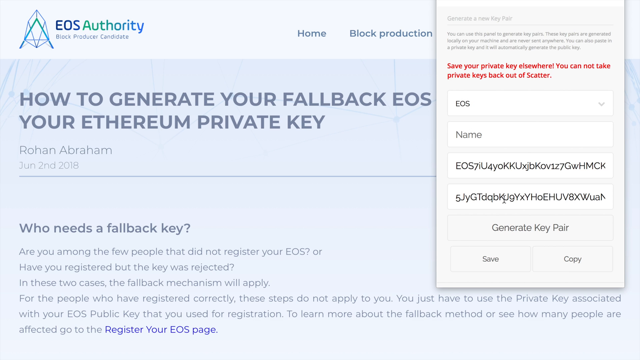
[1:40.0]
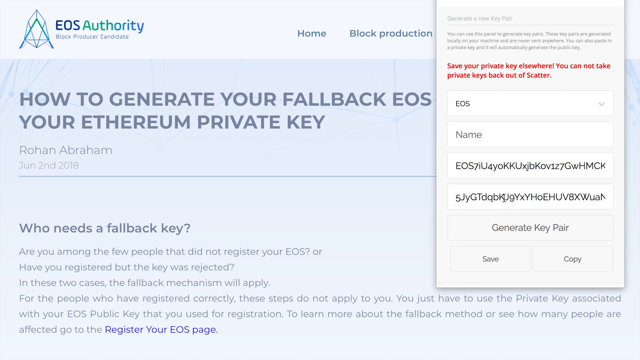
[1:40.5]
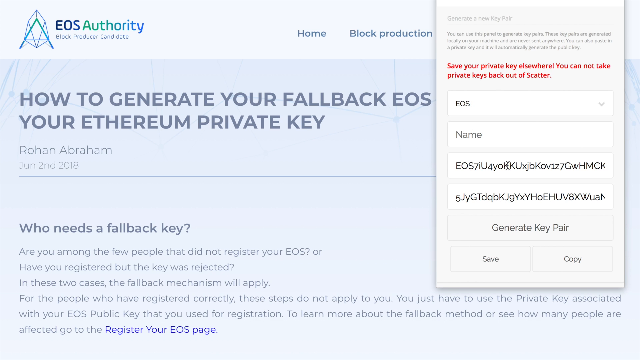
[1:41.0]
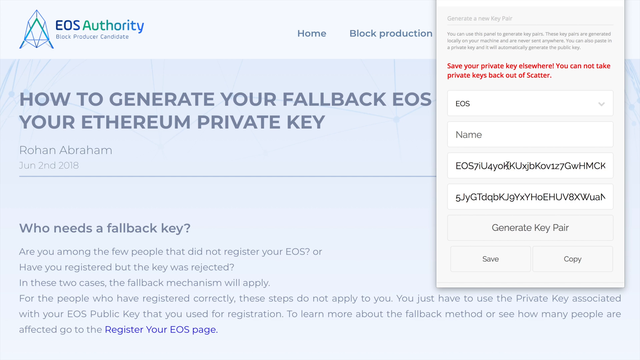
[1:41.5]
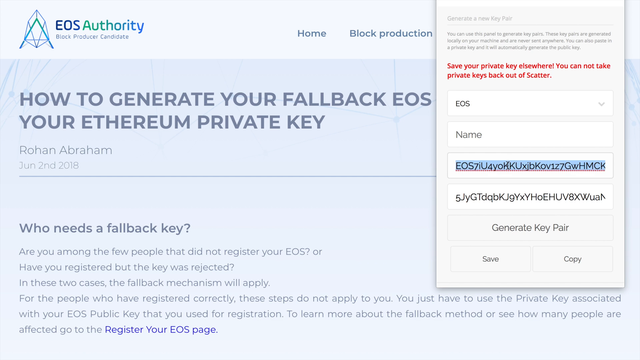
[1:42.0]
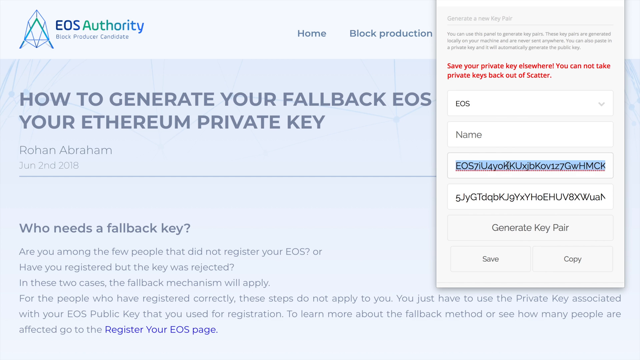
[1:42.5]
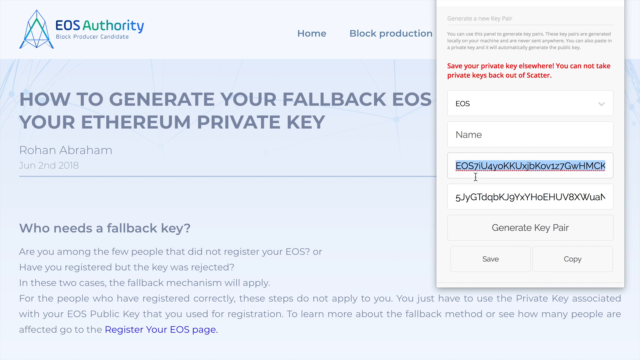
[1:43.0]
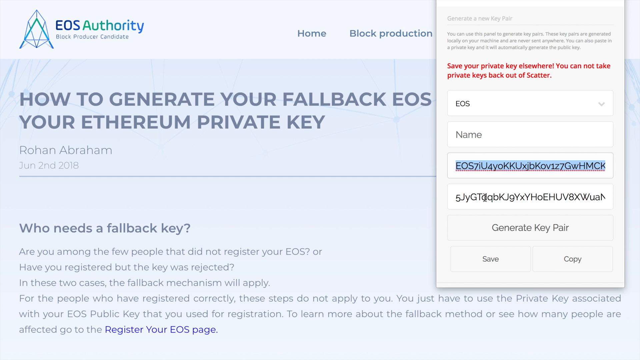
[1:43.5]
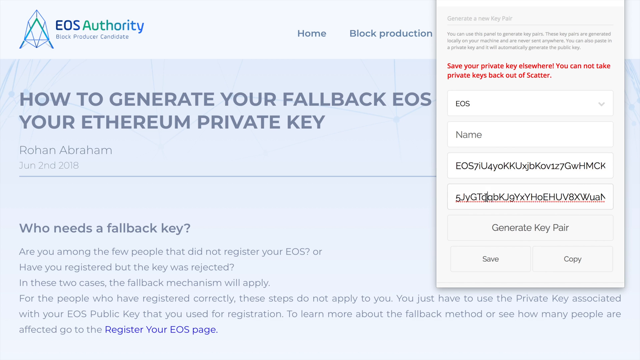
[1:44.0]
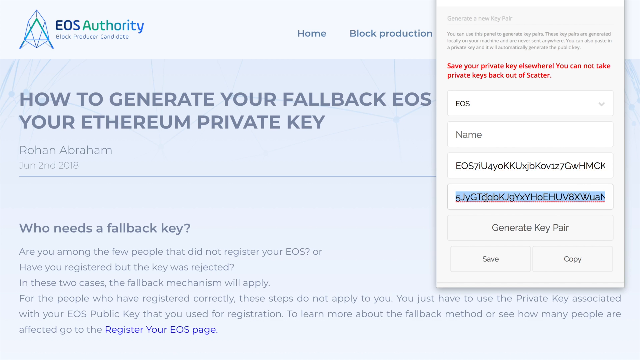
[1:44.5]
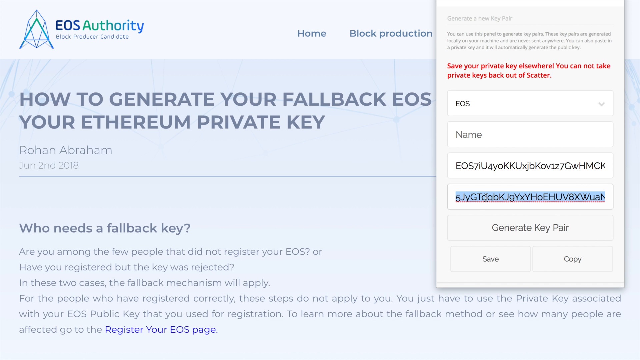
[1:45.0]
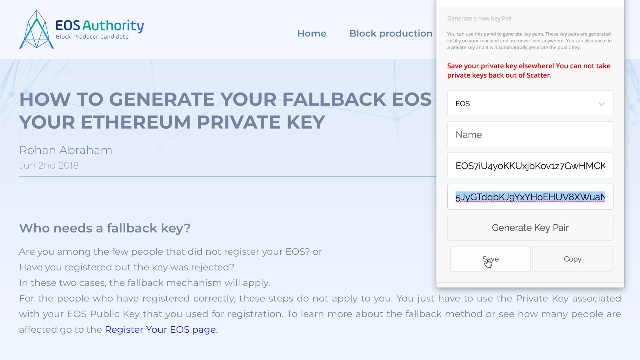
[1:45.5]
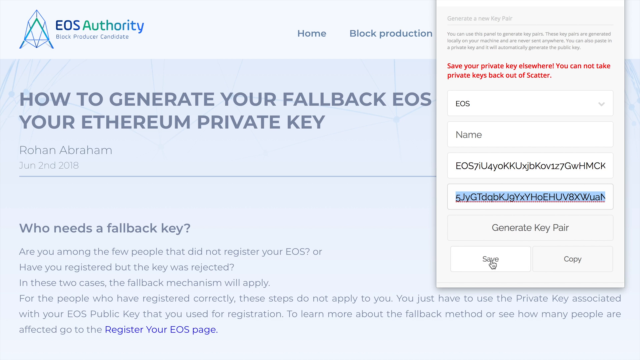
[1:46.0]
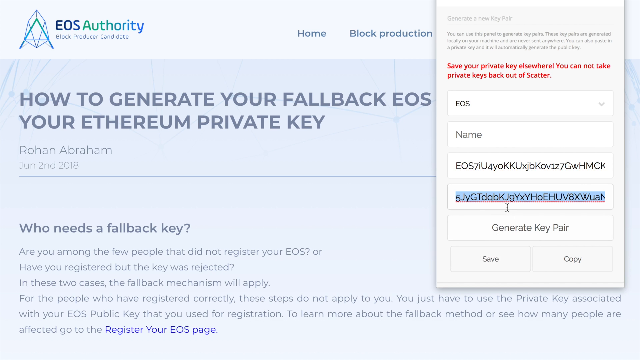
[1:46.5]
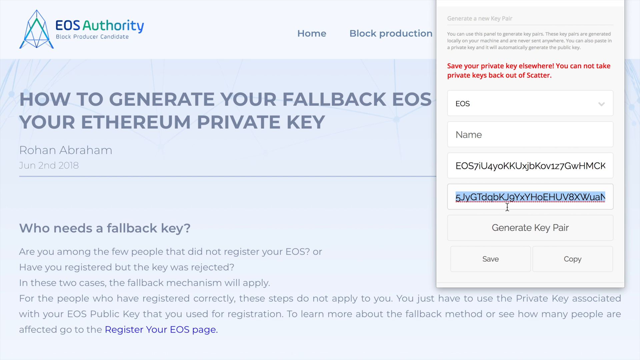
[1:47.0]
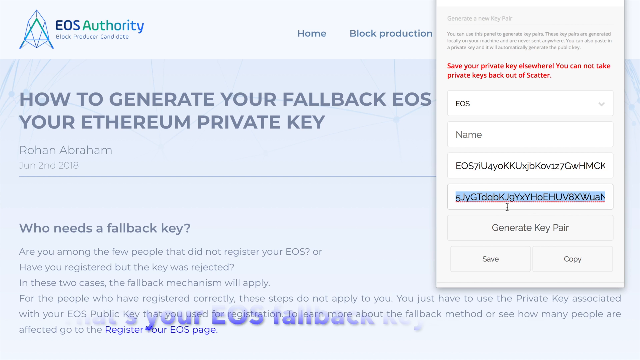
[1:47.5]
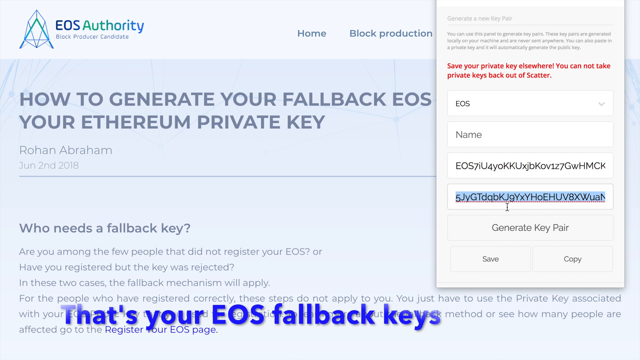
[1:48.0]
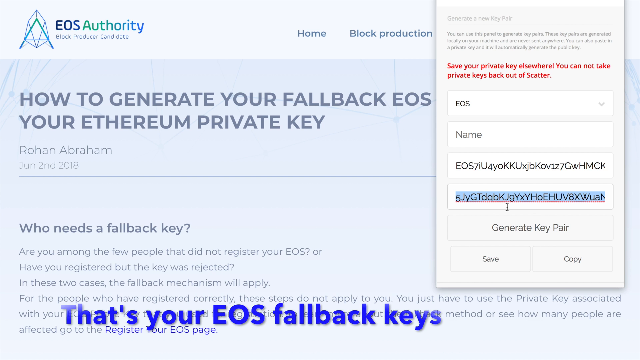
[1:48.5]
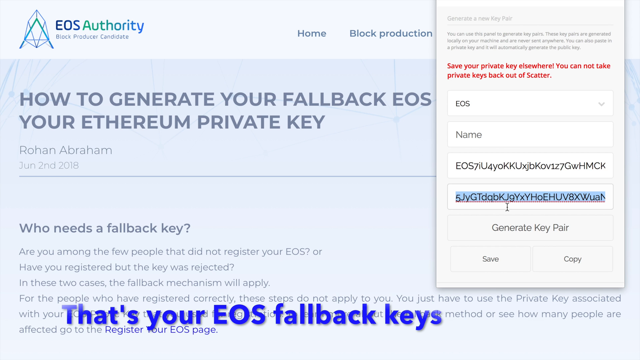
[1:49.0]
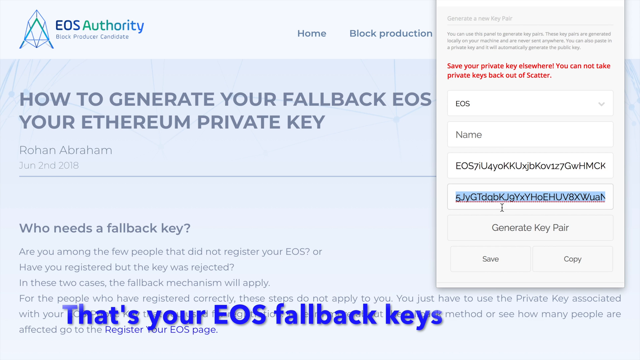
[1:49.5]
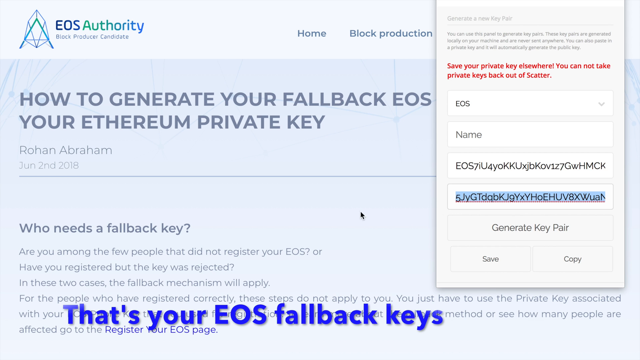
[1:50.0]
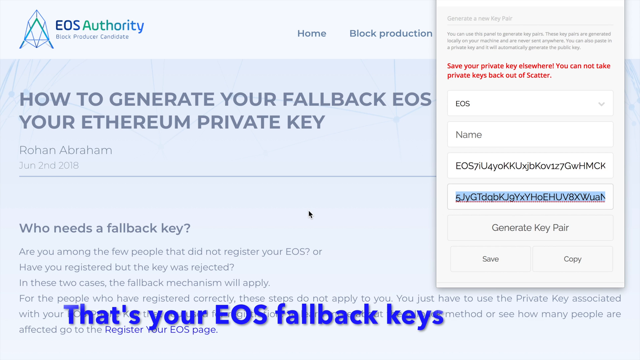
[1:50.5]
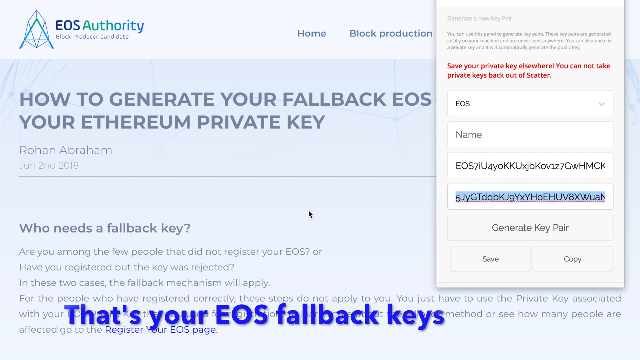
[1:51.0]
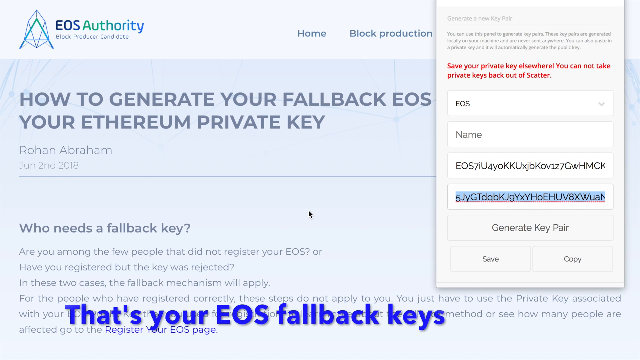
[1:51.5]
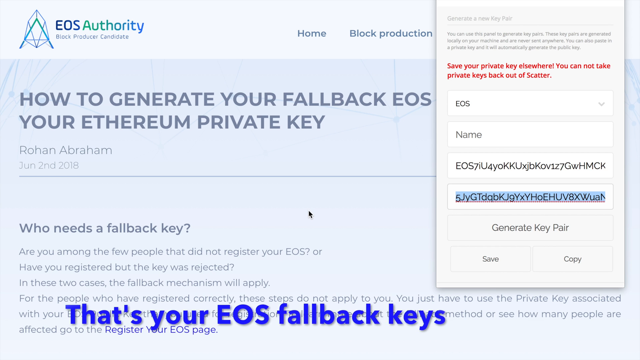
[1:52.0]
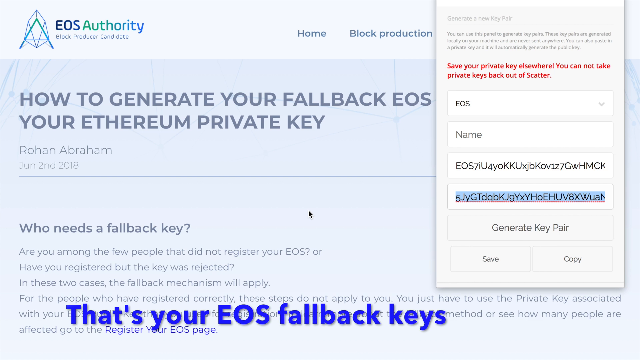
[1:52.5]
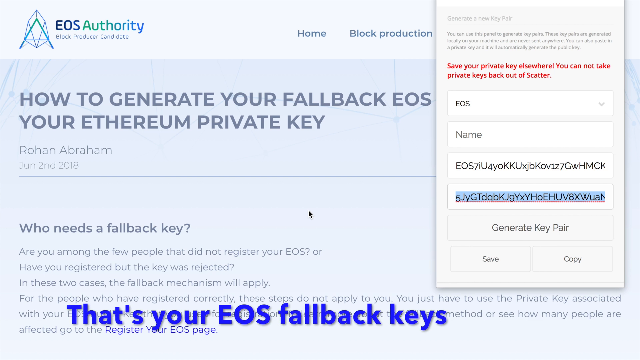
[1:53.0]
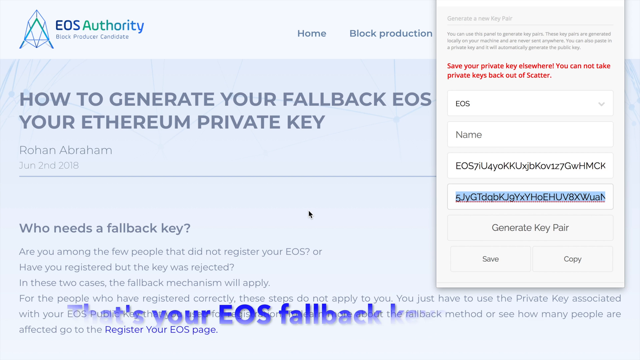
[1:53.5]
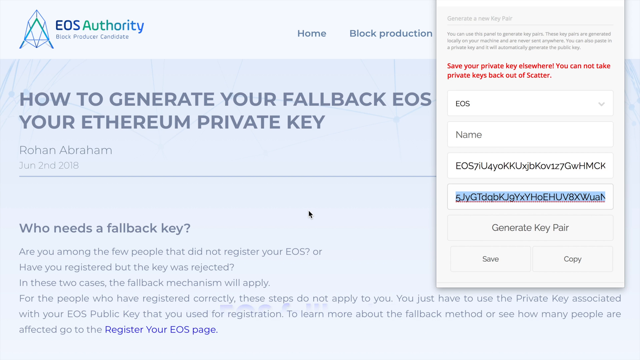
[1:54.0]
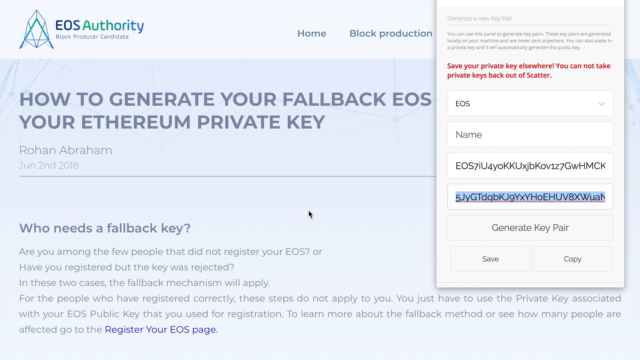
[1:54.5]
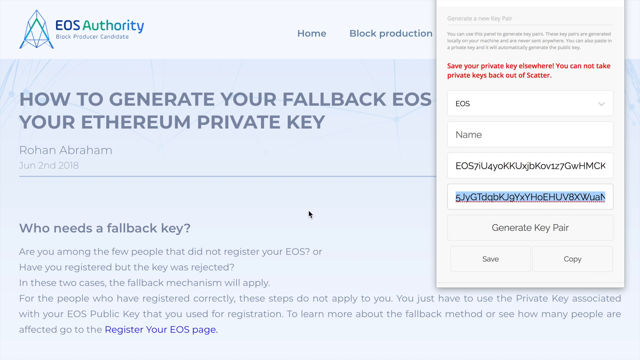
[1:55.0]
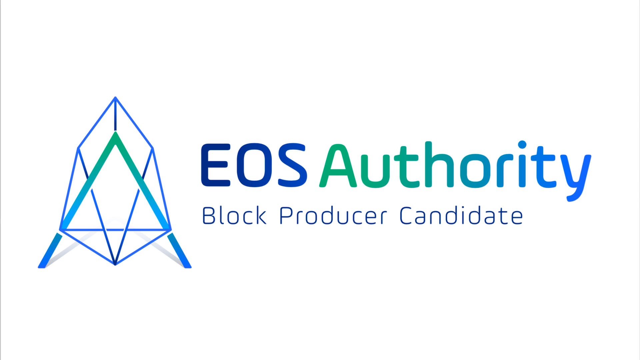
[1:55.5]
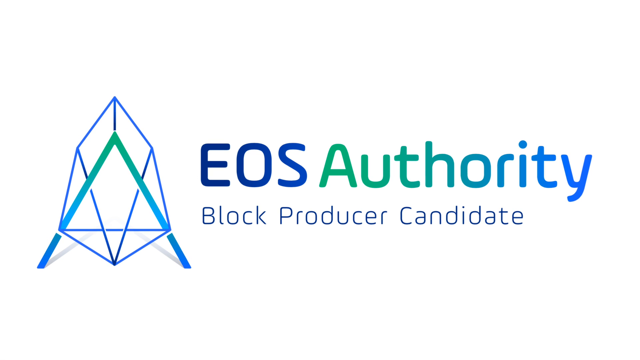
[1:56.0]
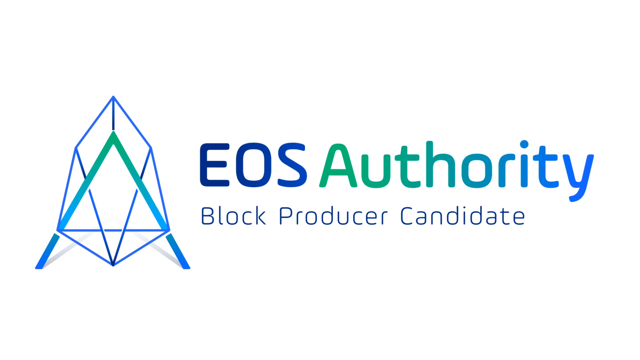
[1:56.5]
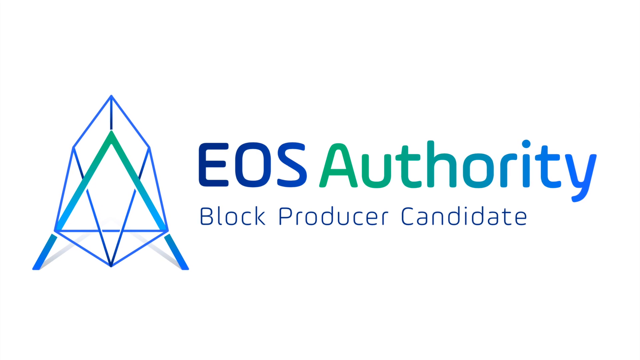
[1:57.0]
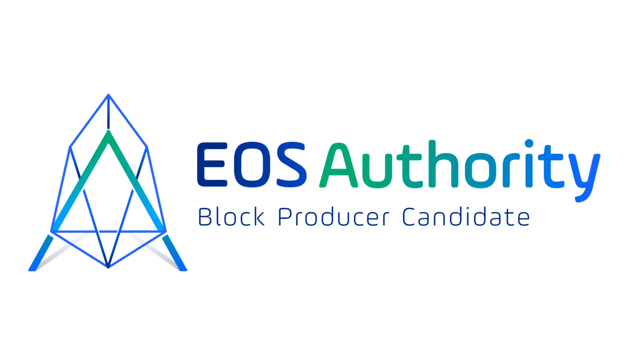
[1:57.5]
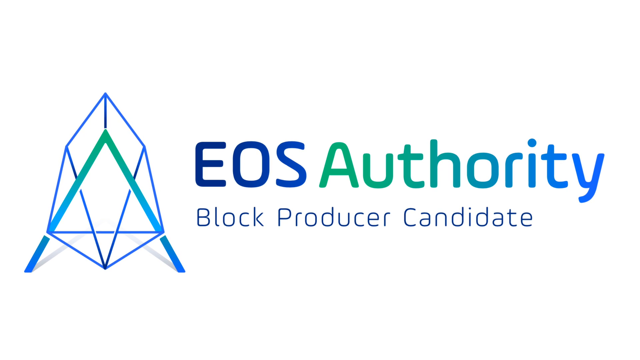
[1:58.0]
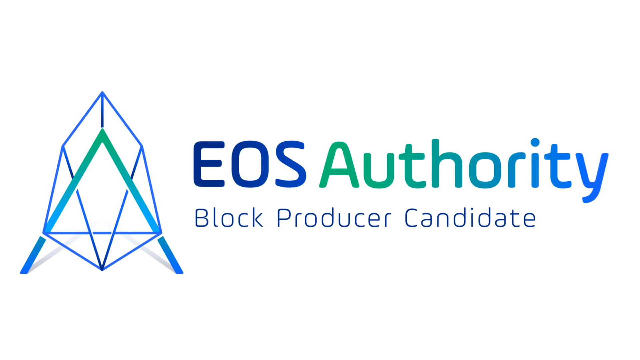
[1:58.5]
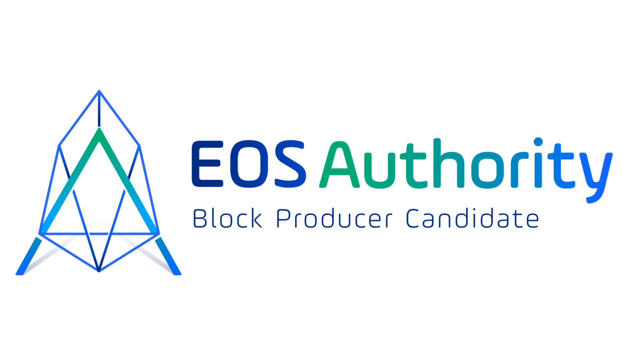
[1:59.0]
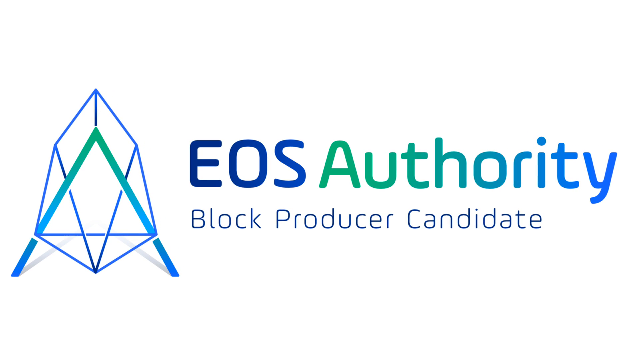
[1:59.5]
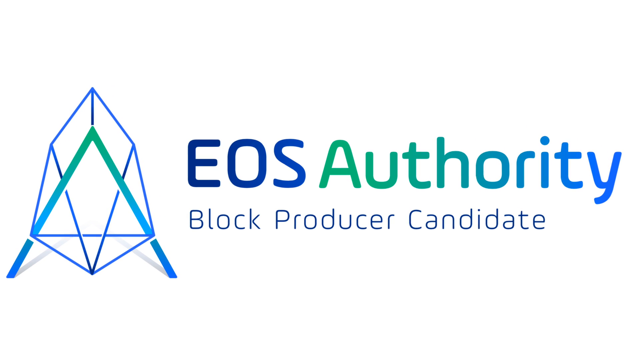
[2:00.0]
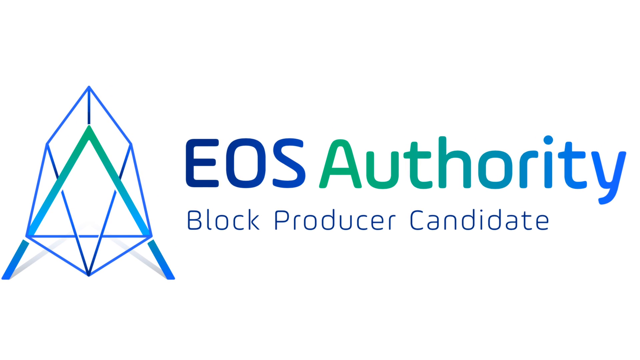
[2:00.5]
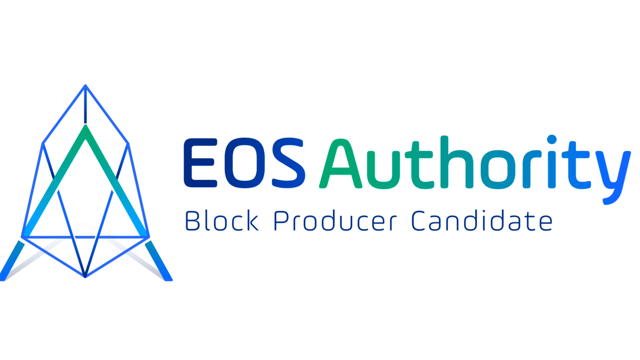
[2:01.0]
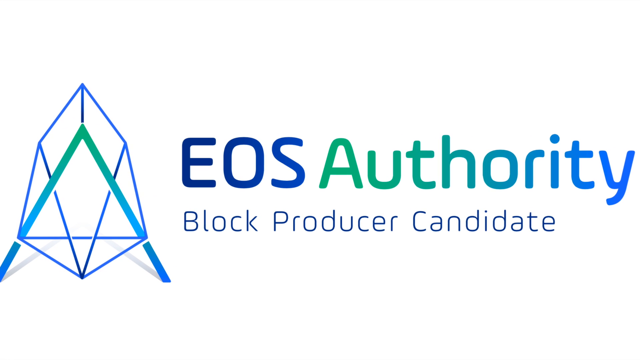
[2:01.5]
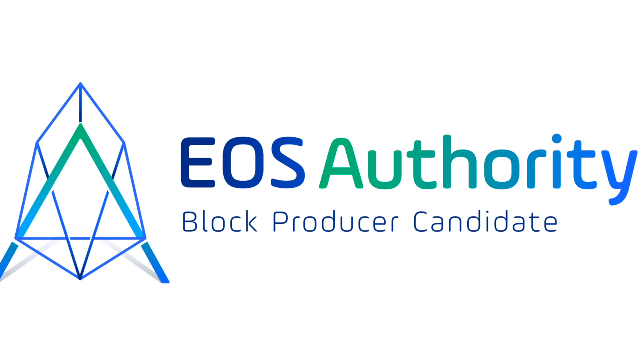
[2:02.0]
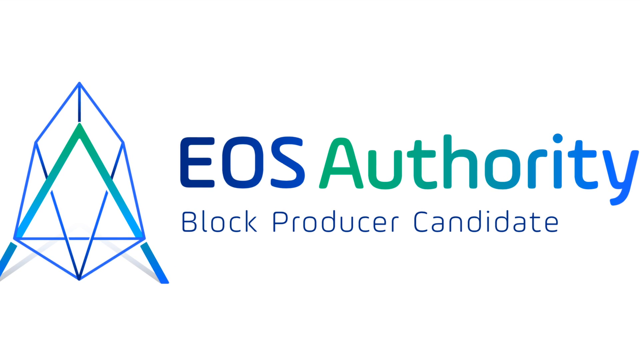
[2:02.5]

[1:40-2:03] A message in blue appears saying that this is the EOS fallback key. The video then cuts to a zoomed-in image of the EOS Authority logo in blue and green, with "block producer candidate" below it in a thin blue font and the triangular diamond-shaped logo on the left. Much of the information is close together. The video shows adding the extension to Chrome, with additional information saying whether it is compatible with the device. There are a number of different slides, like a slideshow.